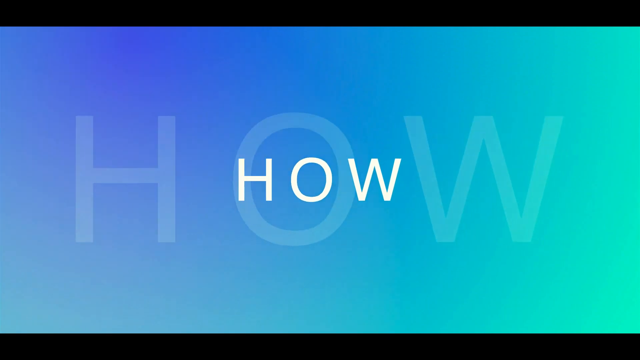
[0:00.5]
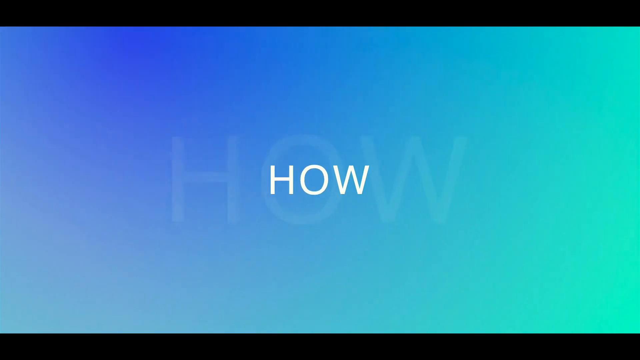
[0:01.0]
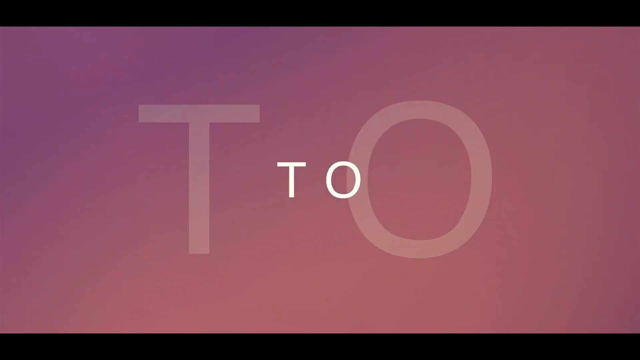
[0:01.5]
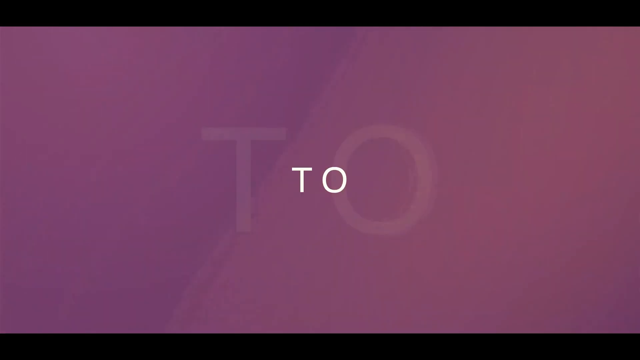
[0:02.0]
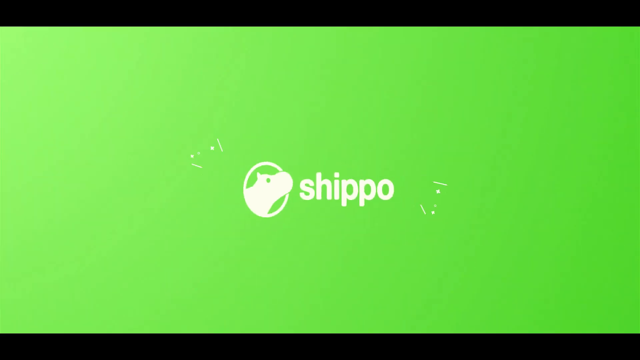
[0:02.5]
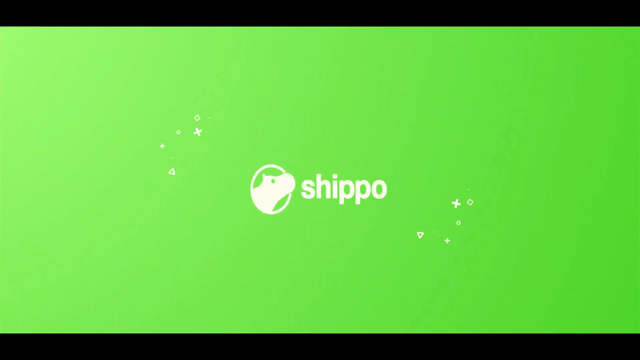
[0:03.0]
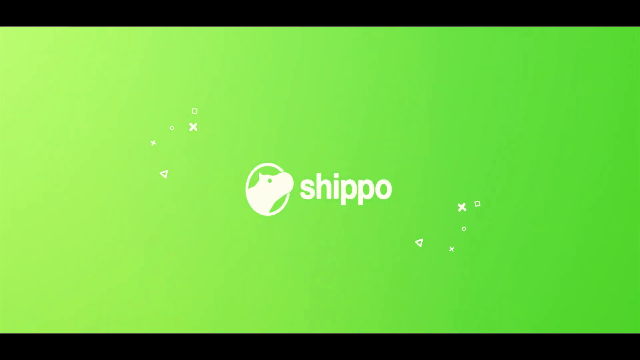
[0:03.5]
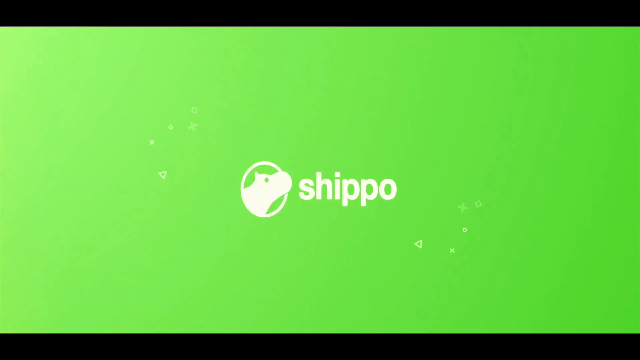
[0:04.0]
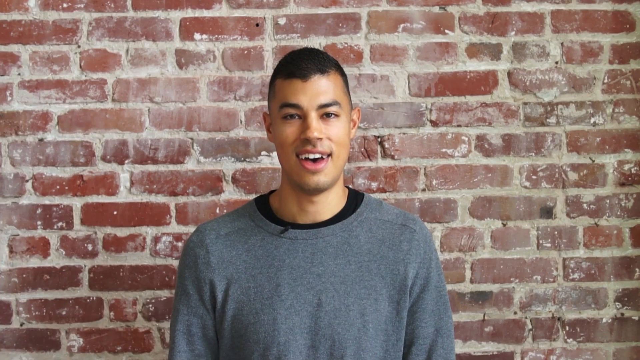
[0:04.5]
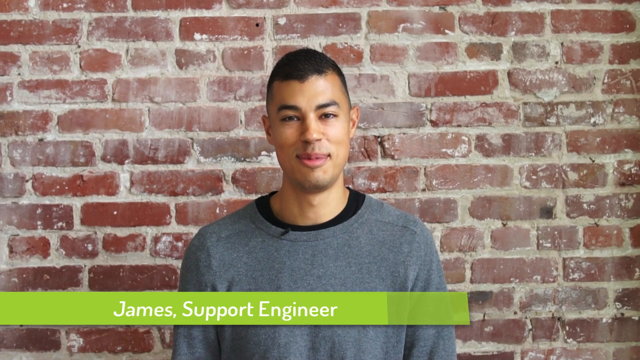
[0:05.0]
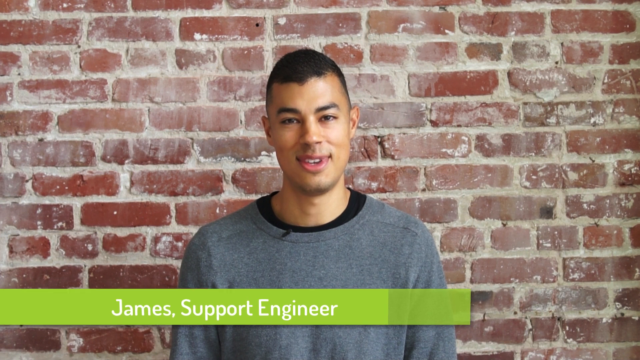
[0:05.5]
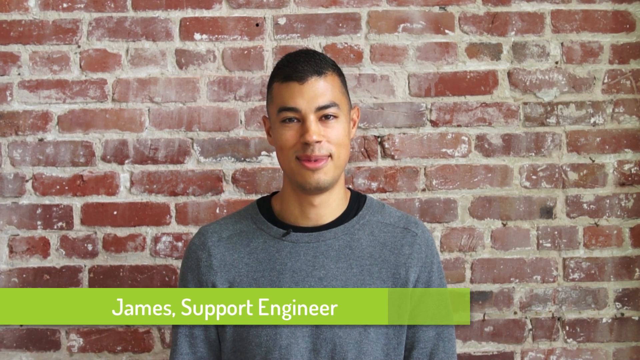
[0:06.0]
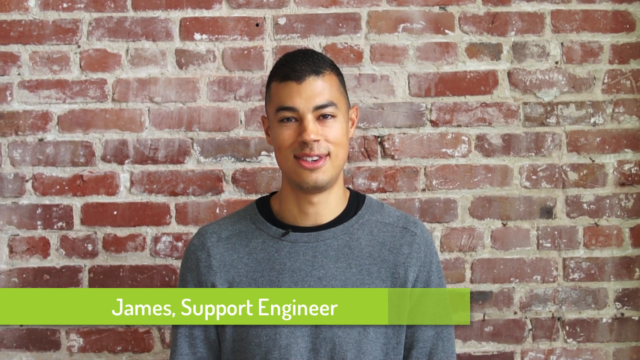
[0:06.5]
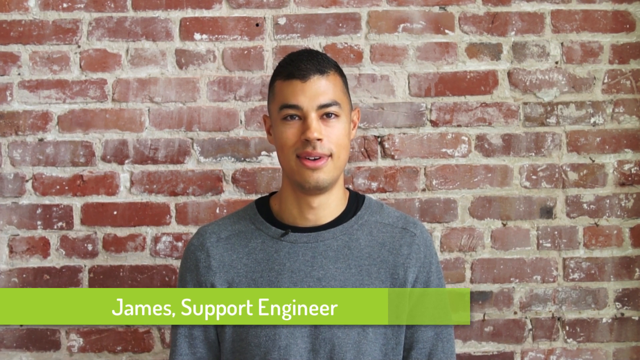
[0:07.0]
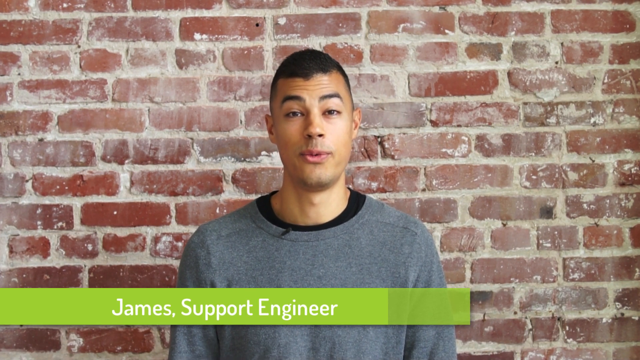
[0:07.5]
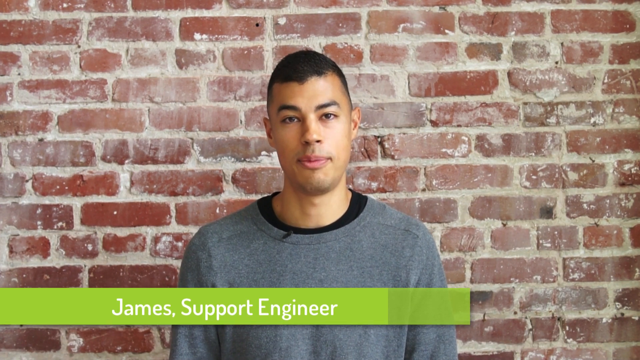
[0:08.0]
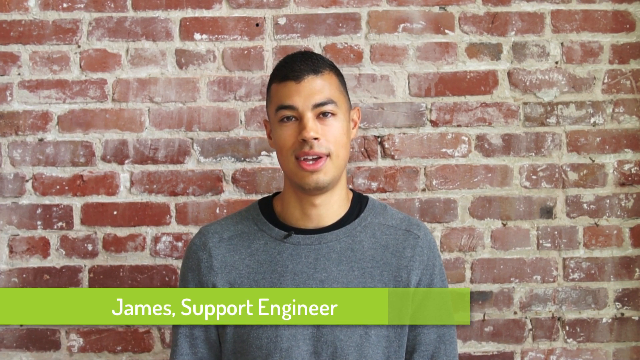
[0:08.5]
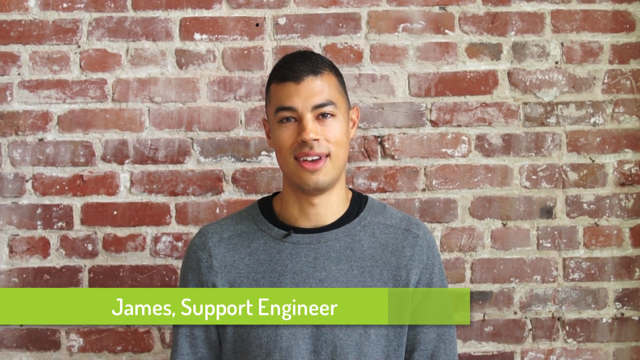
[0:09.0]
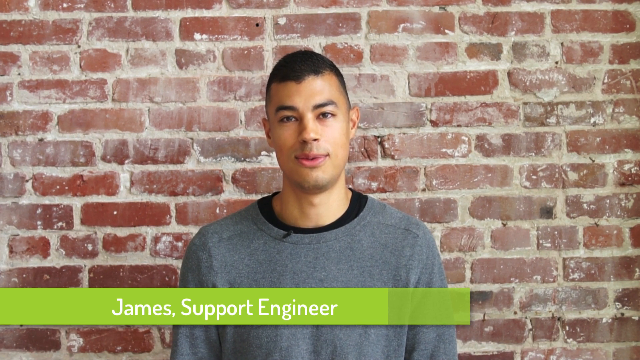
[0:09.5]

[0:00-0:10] A young man appears in a video that seems to be about the company Shippo. He looks to be in his early 20s, possibly a college student. He wears a grey and black sweater, or possibly a grey sweater with a black undershirt. Text in the video identifies him as a support engineer, apparently for Shippo. He stands in front of a brick backdrop, talking, seemingly about the company.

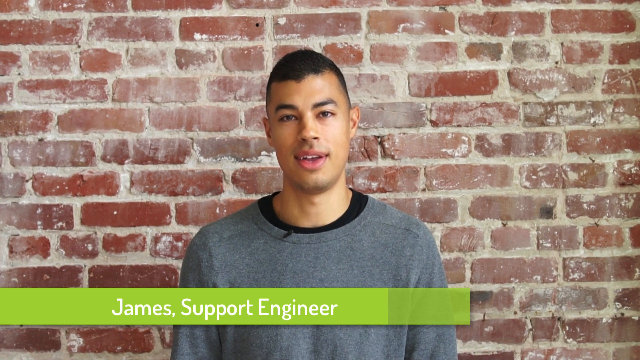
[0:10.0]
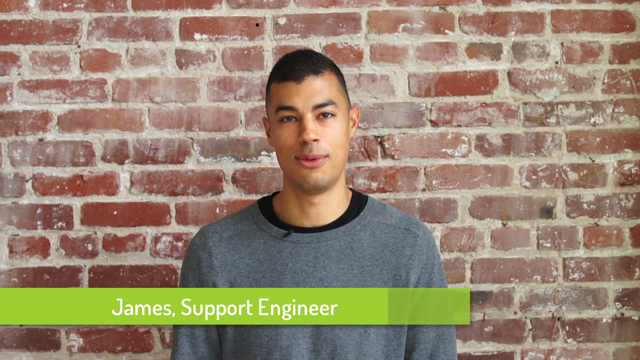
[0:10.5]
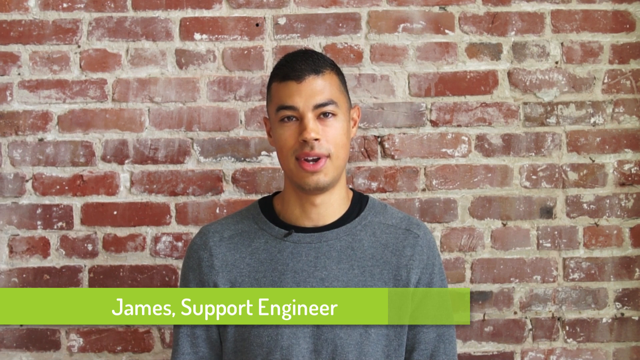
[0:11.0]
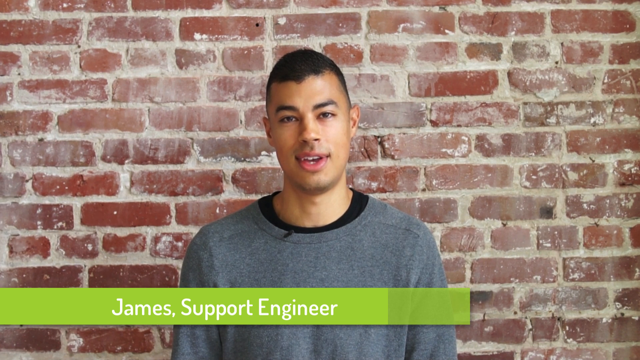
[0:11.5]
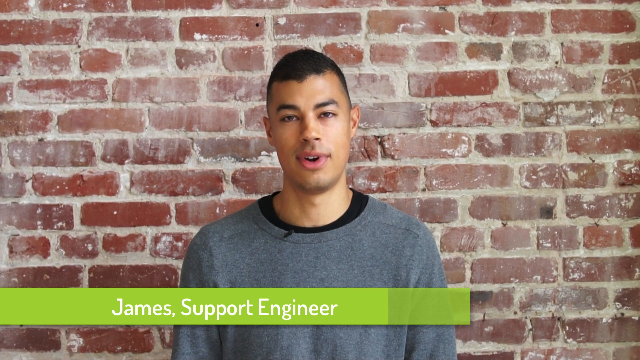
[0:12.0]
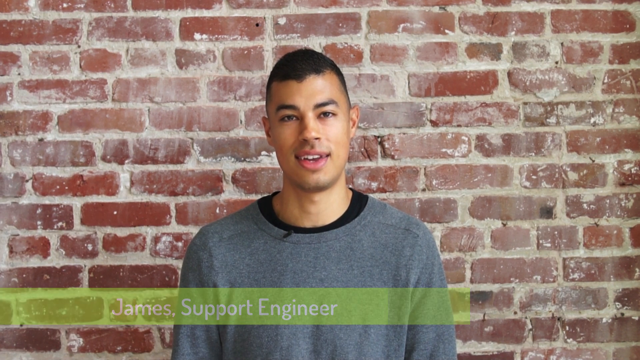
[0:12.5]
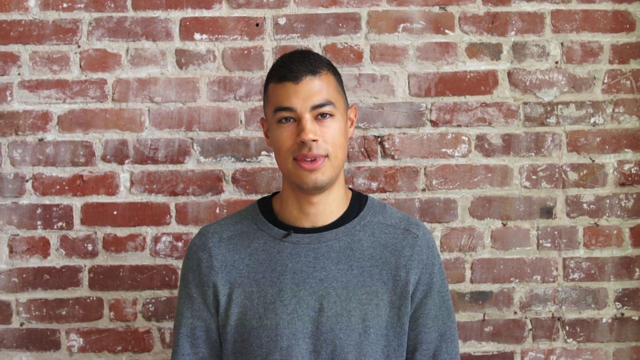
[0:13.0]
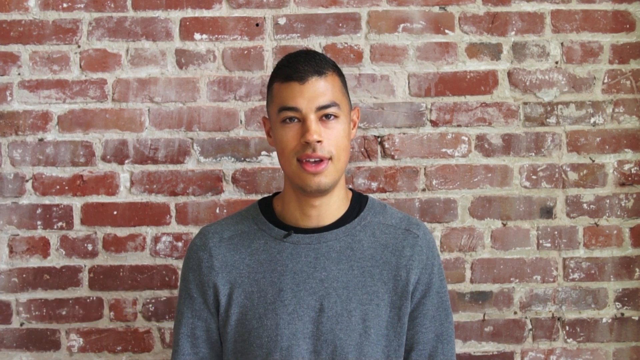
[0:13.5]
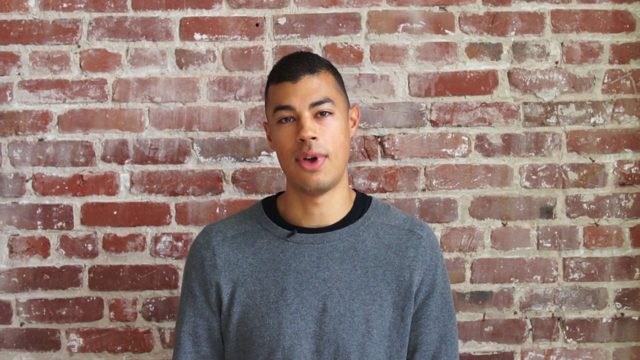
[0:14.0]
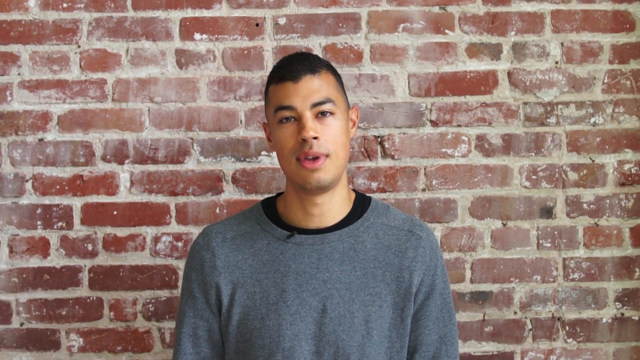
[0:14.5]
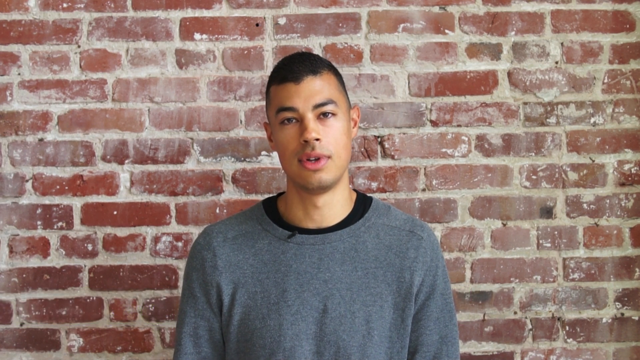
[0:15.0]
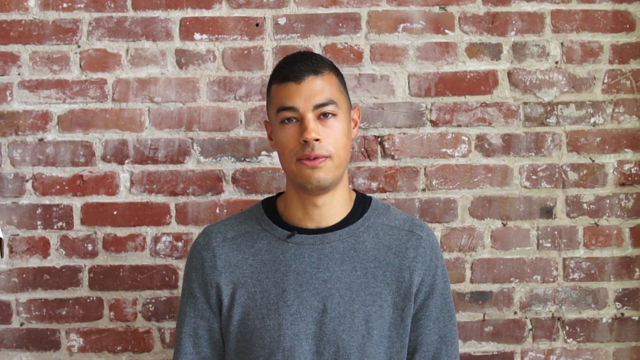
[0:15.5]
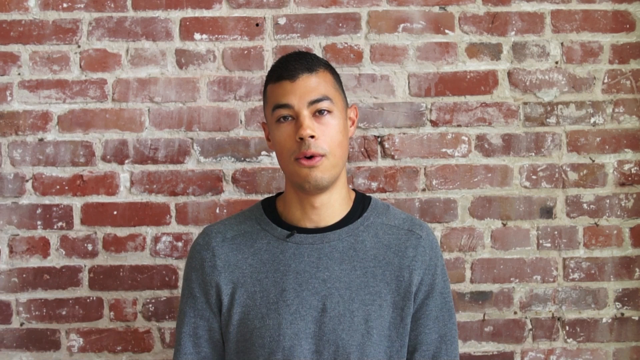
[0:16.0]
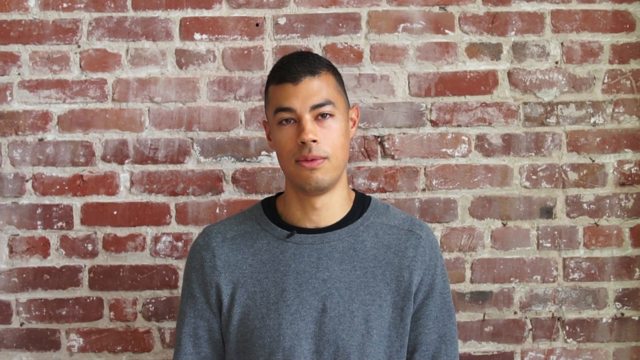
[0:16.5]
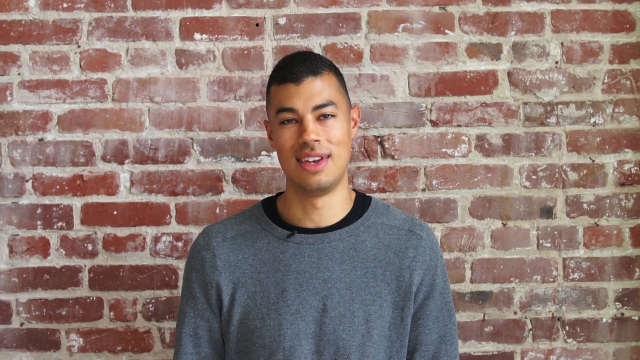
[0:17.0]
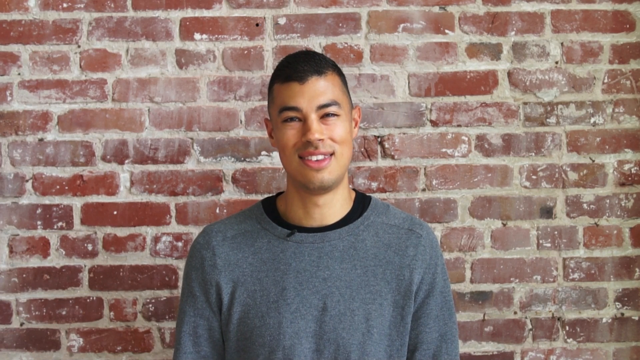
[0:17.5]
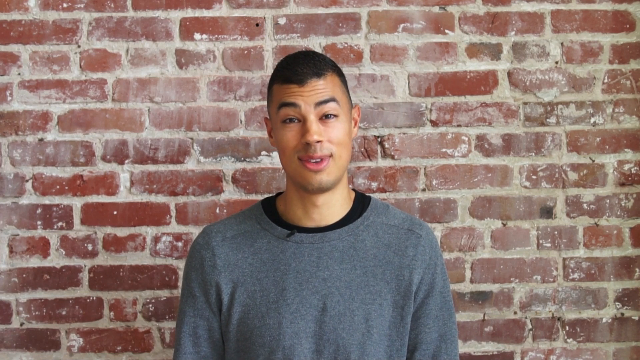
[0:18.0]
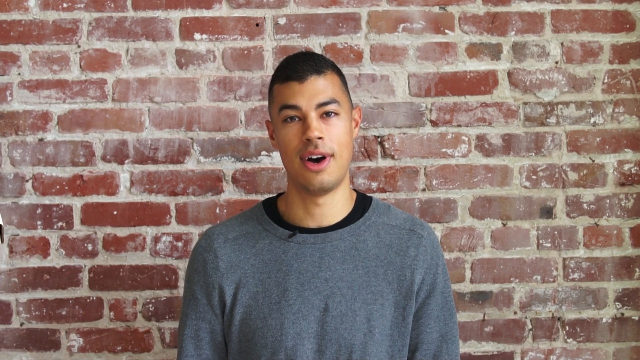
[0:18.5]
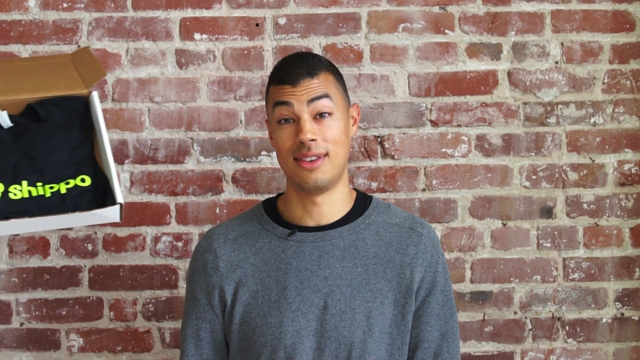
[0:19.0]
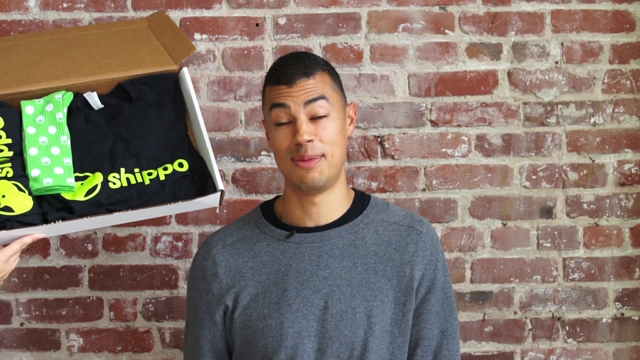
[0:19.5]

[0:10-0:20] The same young man stands in front of a brick backdrop, wearing a grey sweater and a black undershirt. He looks to be maybe in his early 20s, possibly a college student. Green text over the video says he is a support engineer and that his name is James. Toward the end, someone else's hands come into the video holding a box of what seems to be Shippo merch. The video seems to be about how to use Shippo, with the man apparently explaining how it works.